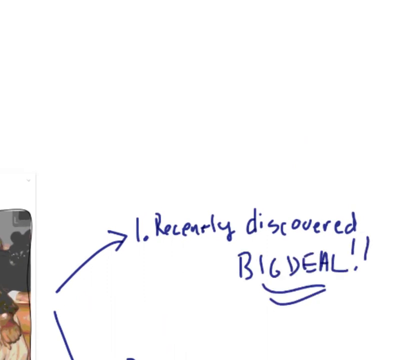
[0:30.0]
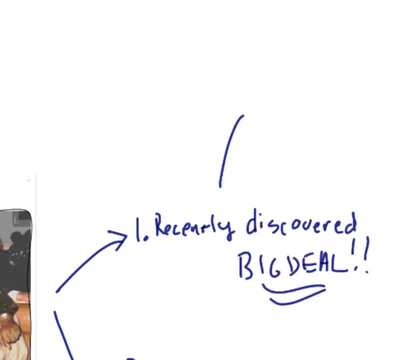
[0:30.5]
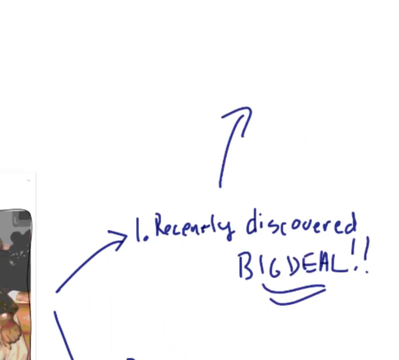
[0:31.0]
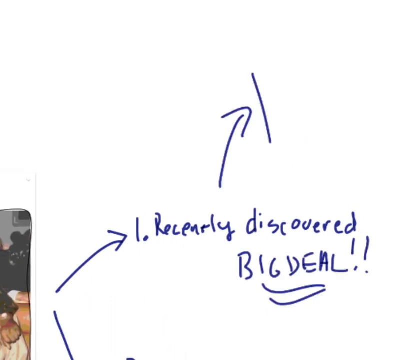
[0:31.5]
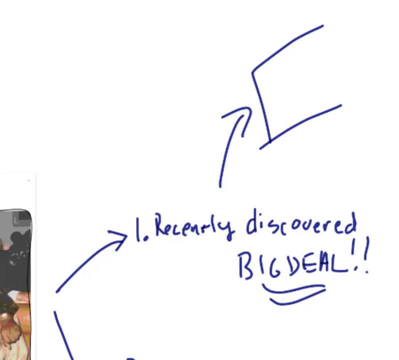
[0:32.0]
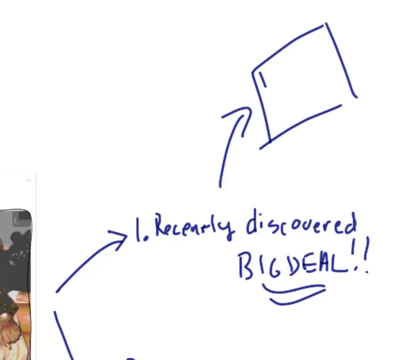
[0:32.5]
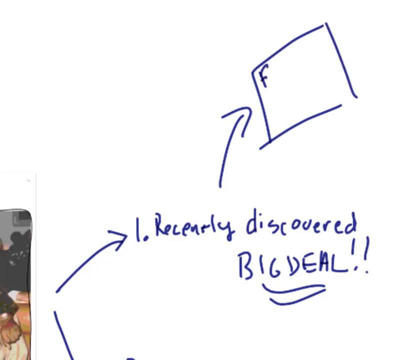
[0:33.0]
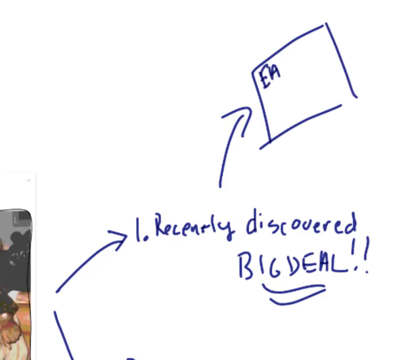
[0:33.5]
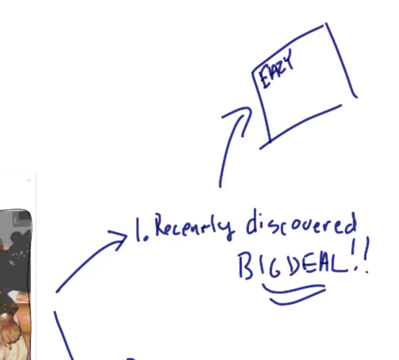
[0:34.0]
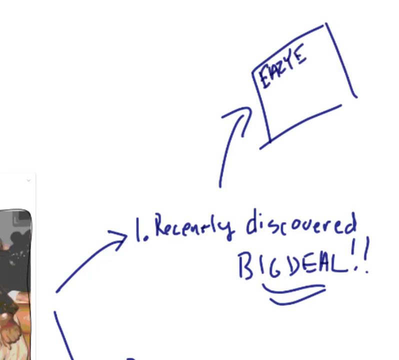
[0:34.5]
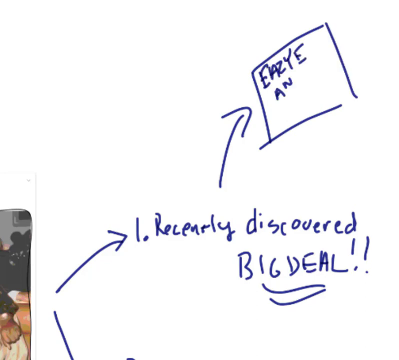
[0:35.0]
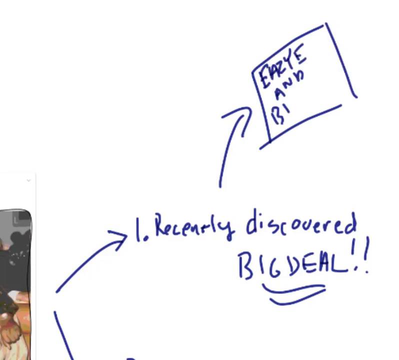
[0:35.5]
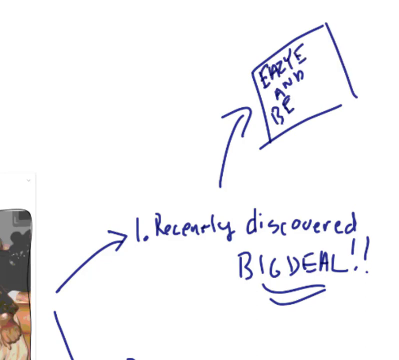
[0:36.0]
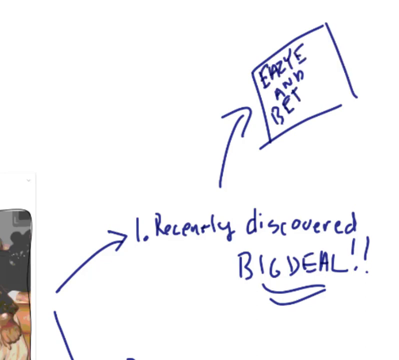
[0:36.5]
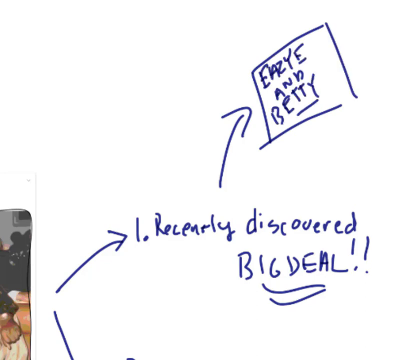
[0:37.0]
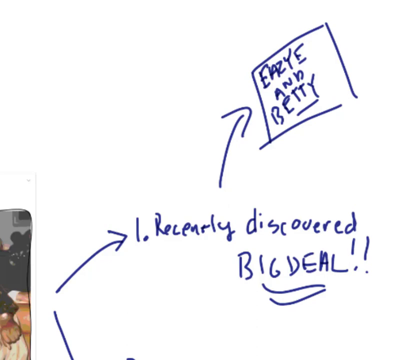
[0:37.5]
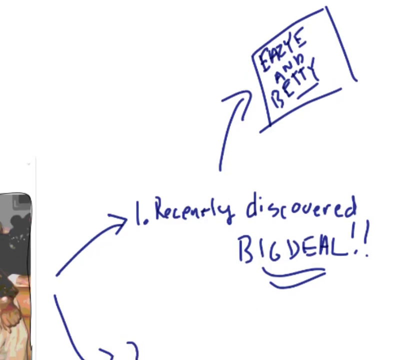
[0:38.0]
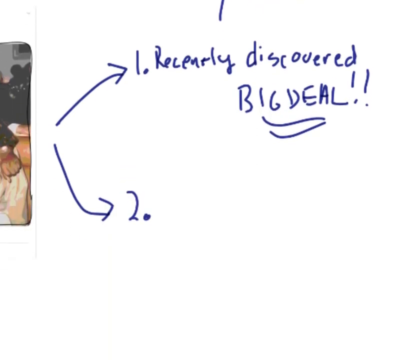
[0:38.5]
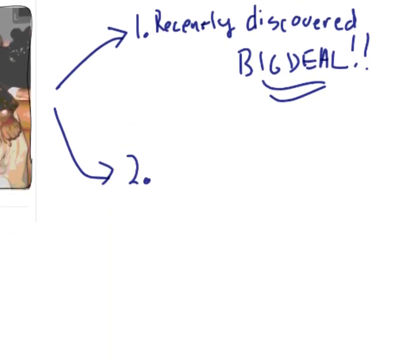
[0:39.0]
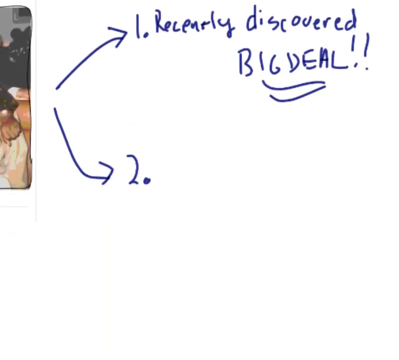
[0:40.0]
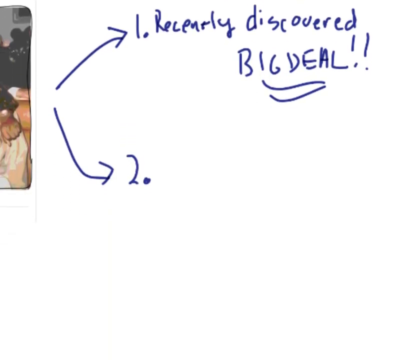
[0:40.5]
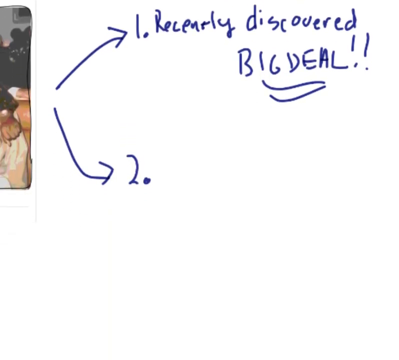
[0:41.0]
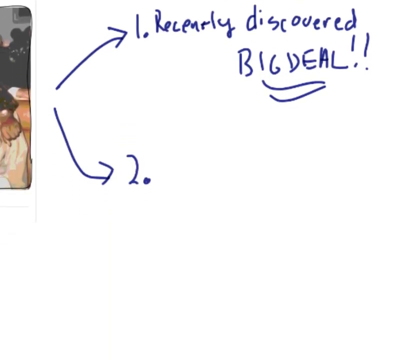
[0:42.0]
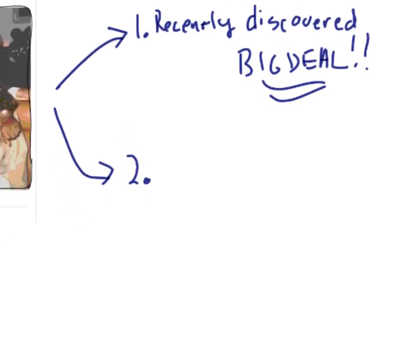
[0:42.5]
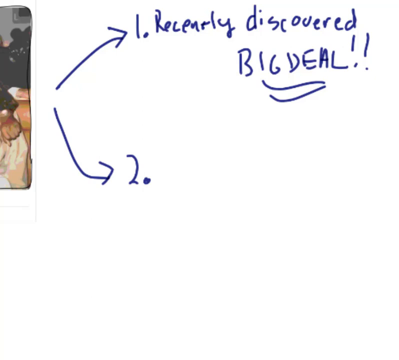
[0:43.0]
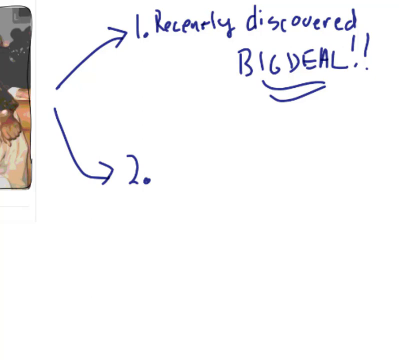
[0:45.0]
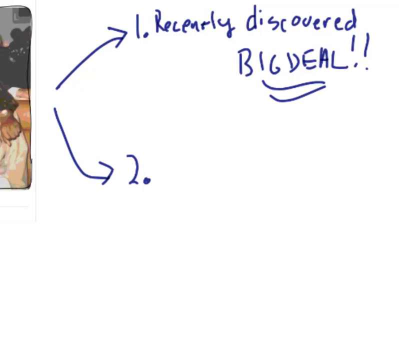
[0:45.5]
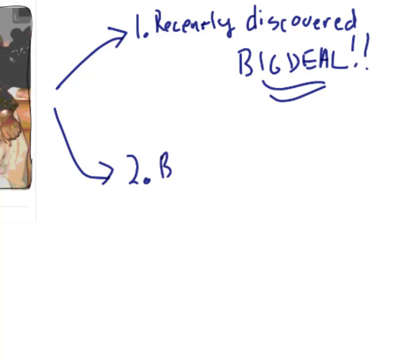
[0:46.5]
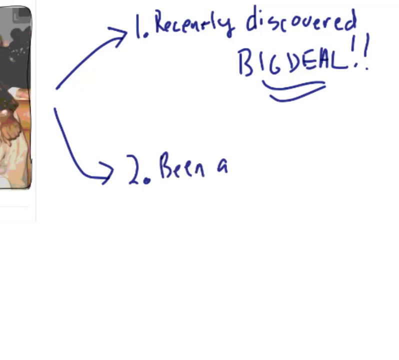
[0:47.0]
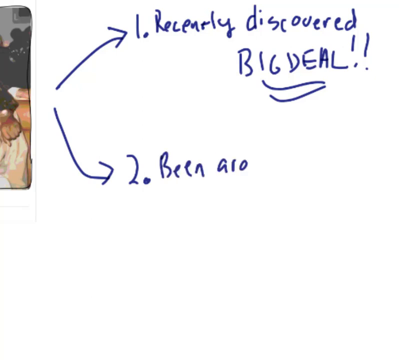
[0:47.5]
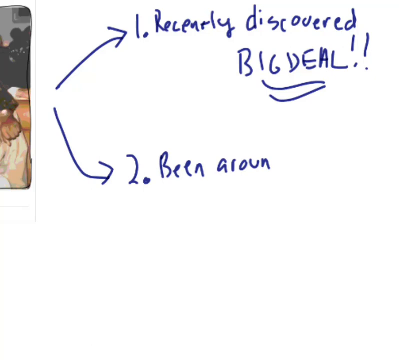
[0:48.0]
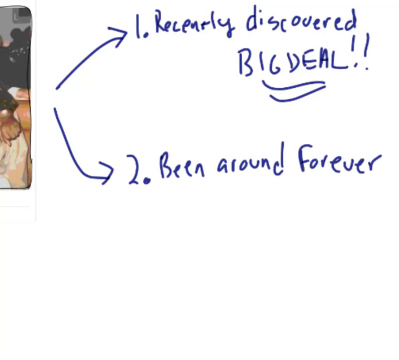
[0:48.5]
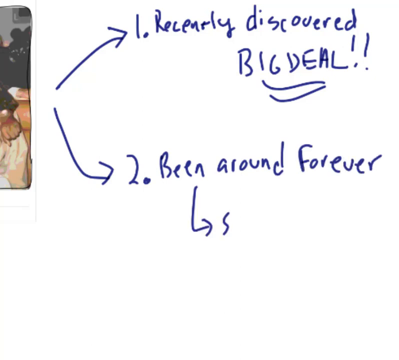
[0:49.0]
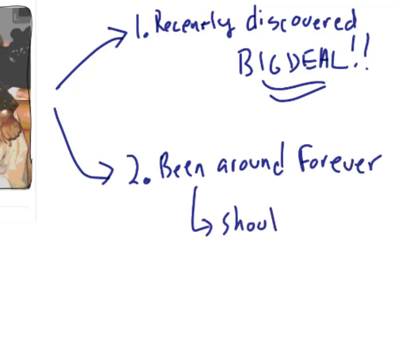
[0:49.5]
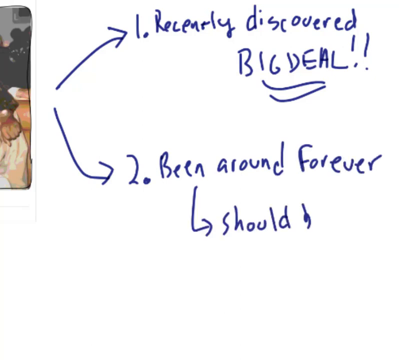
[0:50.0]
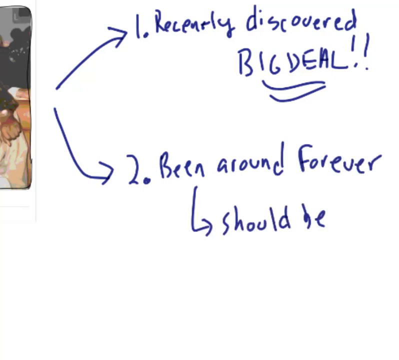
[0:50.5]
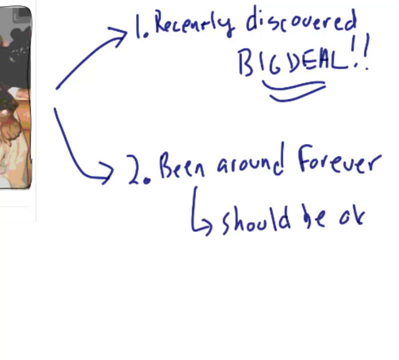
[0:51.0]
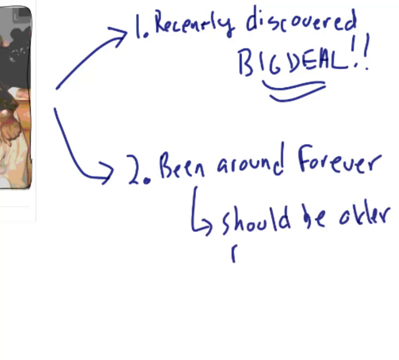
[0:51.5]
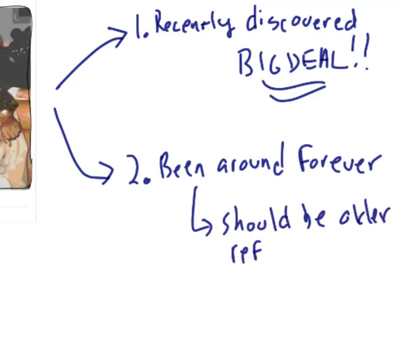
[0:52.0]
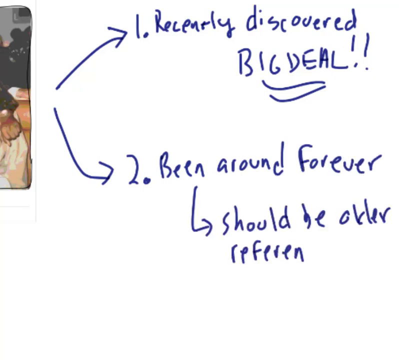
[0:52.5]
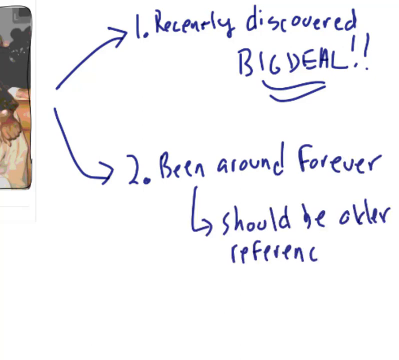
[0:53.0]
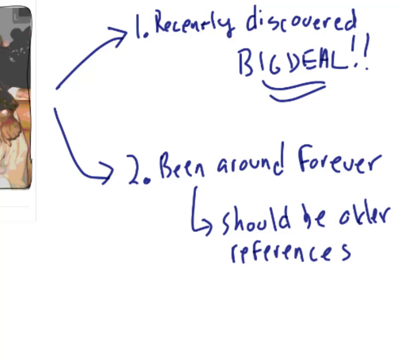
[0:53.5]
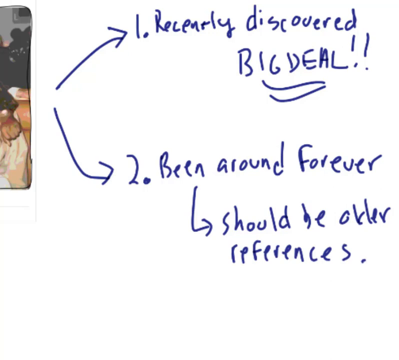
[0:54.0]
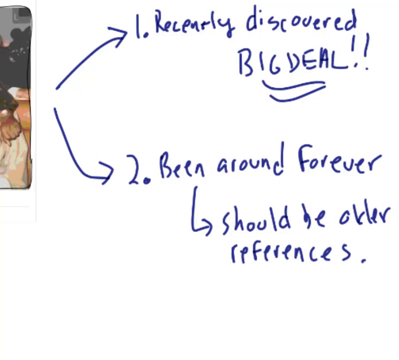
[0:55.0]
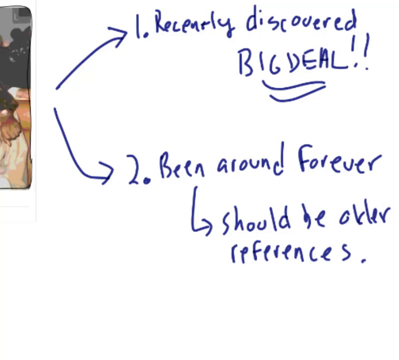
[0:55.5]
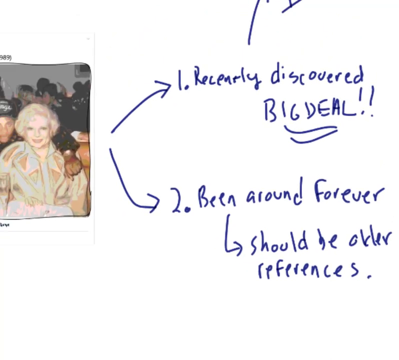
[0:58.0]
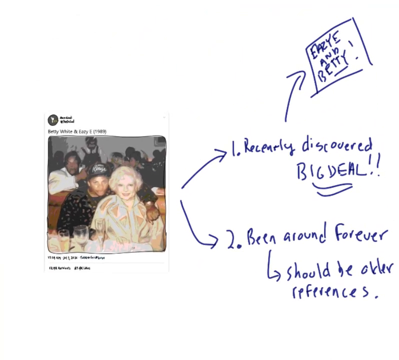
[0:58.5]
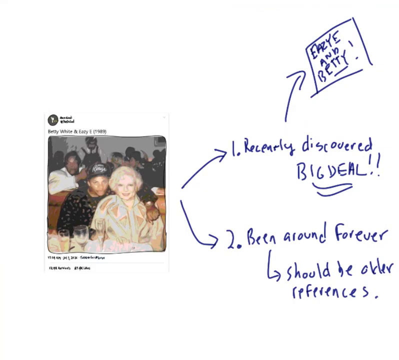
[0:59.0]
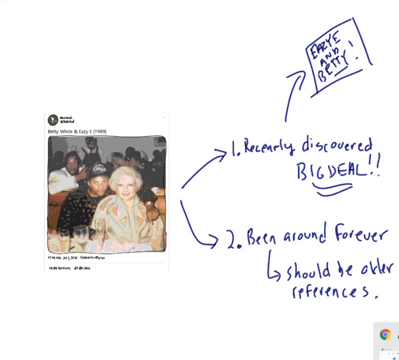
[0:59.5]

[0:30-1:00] The view is zoomed in on the right side, showing the arrow pointing up from almost the bottom left corner, with just the edge of the photo visible in the bottom left. It says "1", then "recently discovered", with "big deal" underlined twice beneath it. An arrow above "recently" points up, and a square box, angled down on its left side, says "Easy E and Betty White" in blue. The camera moves down to the "2" at the bottom on the right side, which says "been around forever". Below that, an arrow goes down and to the right, with the words "should be older references". The view then zooms out to show the picture and tweet on the left and all the blue writing on the right, with the arrow going up to number one and the arrow going down to the right for number two.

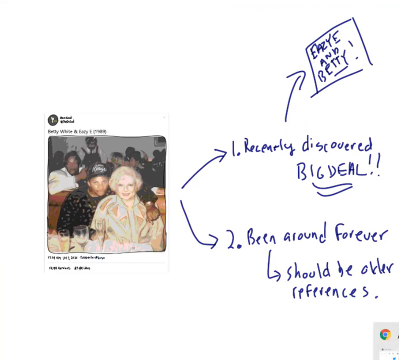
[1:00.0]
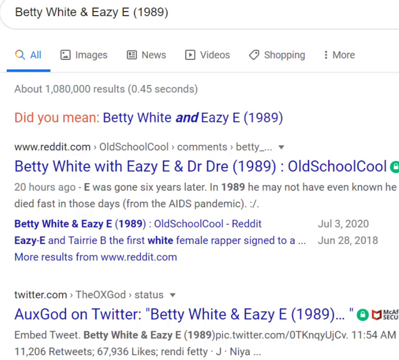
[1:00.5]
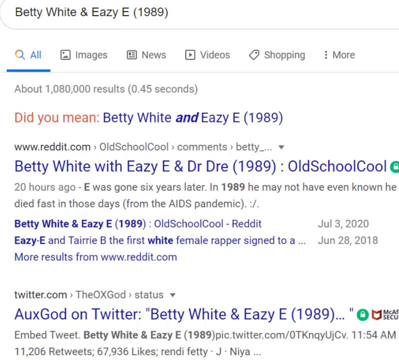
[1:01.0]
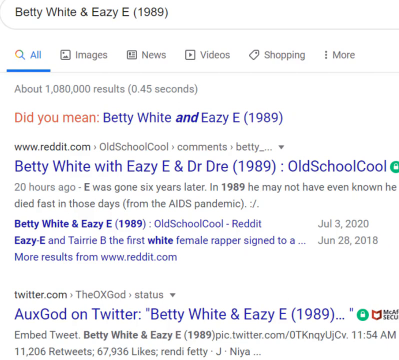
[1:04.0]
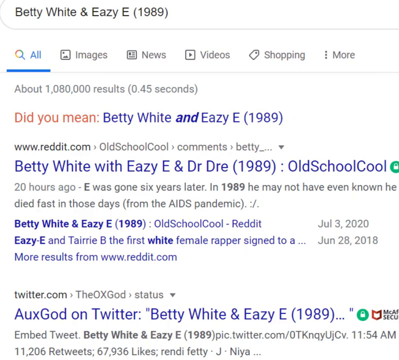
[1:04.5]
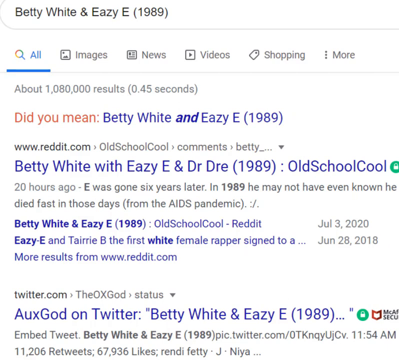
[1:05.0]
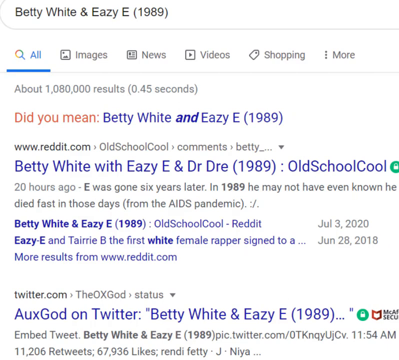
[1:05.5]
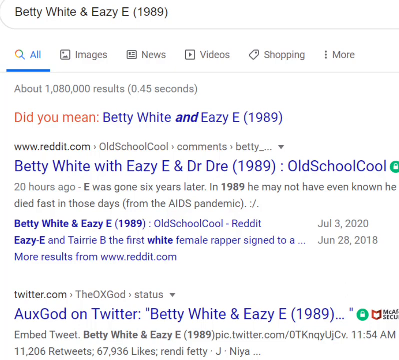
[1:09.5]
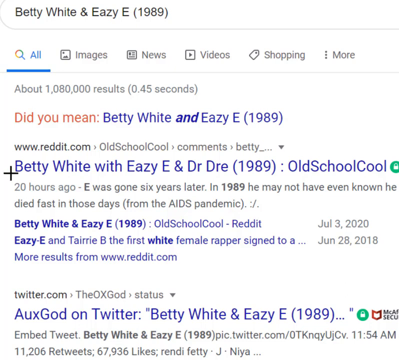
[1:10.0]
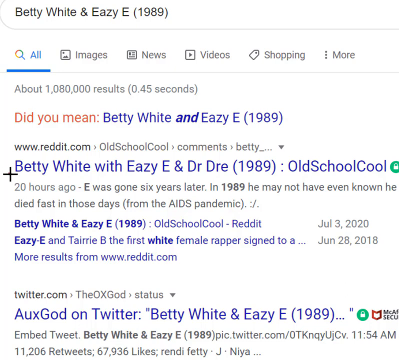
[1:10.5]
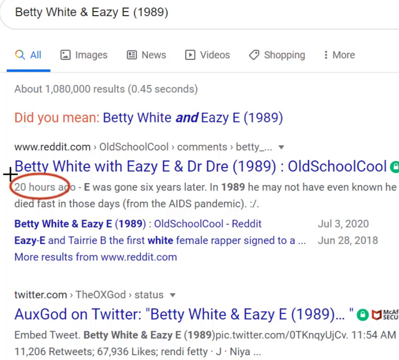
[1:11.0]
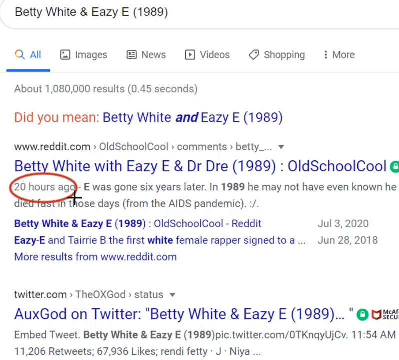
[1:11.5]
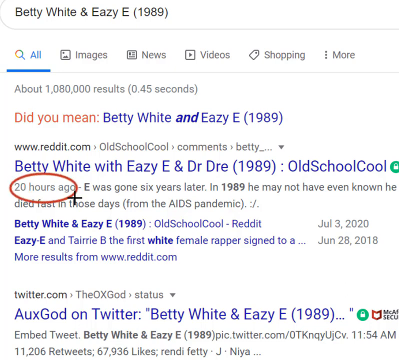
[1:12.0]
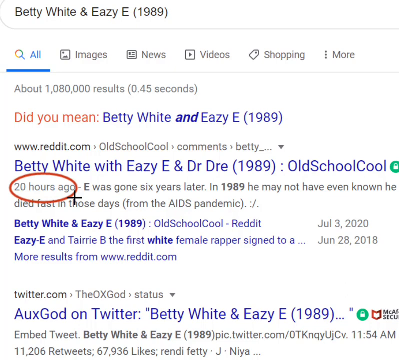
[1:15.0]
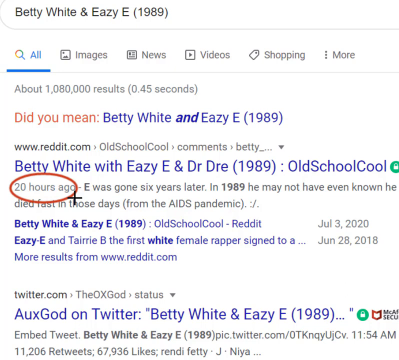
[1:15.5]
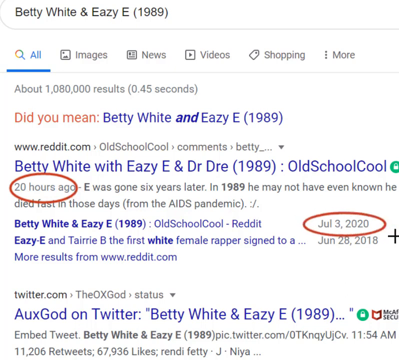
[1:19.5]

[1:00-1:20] On a white background, the tweet and image are on the left side, almost centered. Two lines of black text under the picture cannot be made out. To the right of the picture, a blue arrow goes up to the right to number one, and another goes down and to the right to number two. The video then goes to a Google page. The search bar at the top, cut off at the top and on the right, says "Betty White and easy 1989", and below it are the options all, images, news, video, shopping and more. Then comes the number of results and how long the search took, followed by "did you mean Betty White and easy 1989?". Below that are a couple of links, one for Reddit and one for Twitter. The Reddit link has a title, some information under it, and a couple more links. A cursor comes in, goes to the Reddit link and draws a circle around "20 hours ago", then moves over to the right side and puts a red circle around the date.